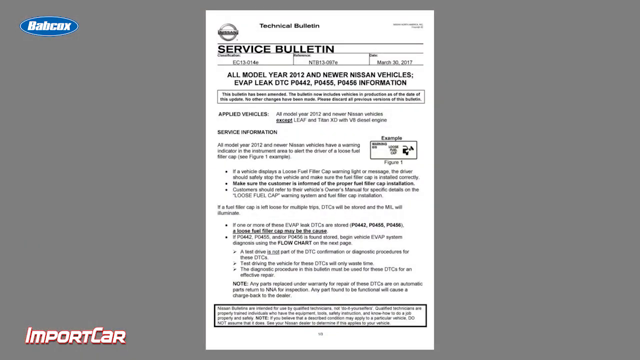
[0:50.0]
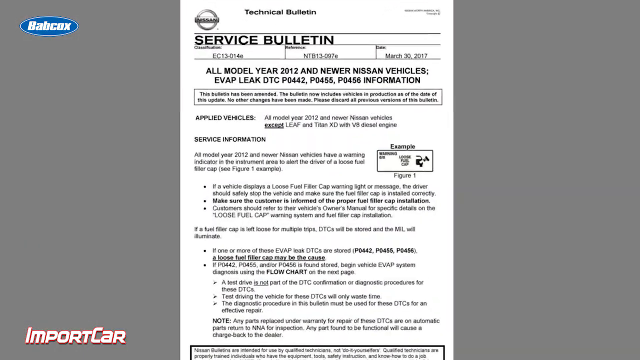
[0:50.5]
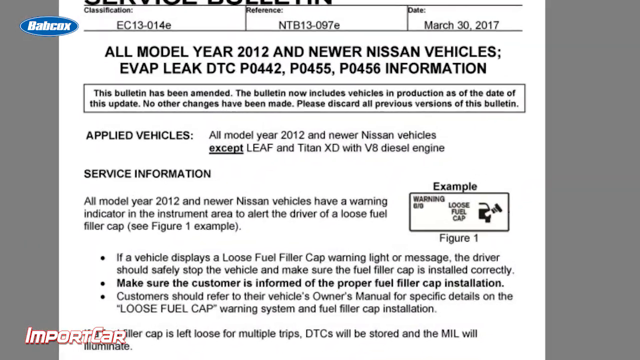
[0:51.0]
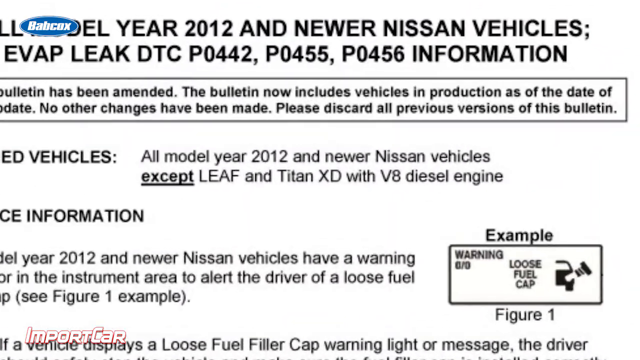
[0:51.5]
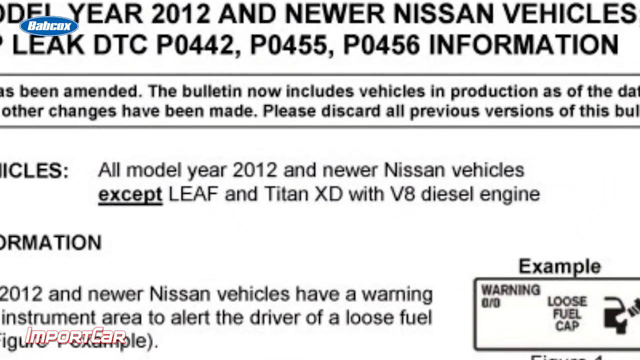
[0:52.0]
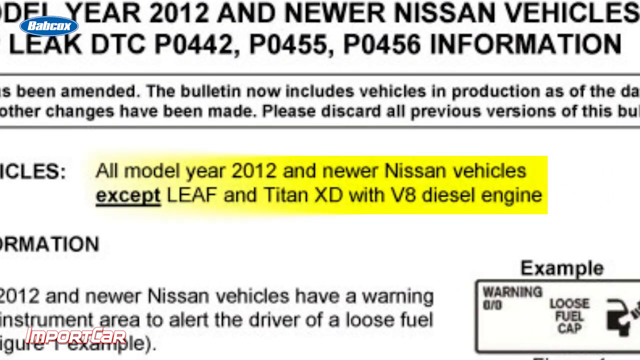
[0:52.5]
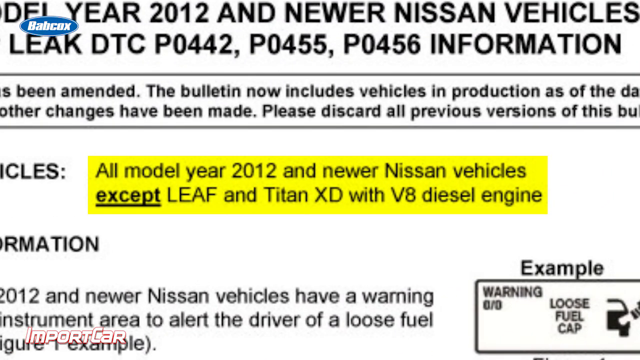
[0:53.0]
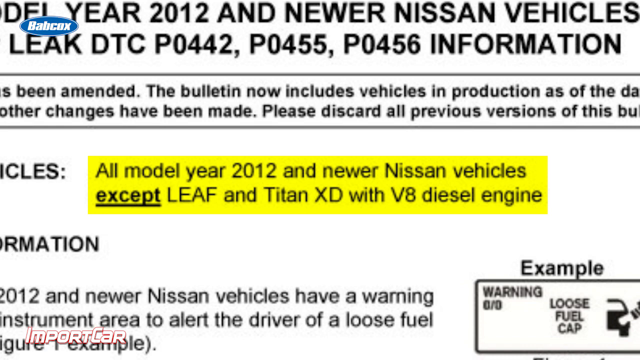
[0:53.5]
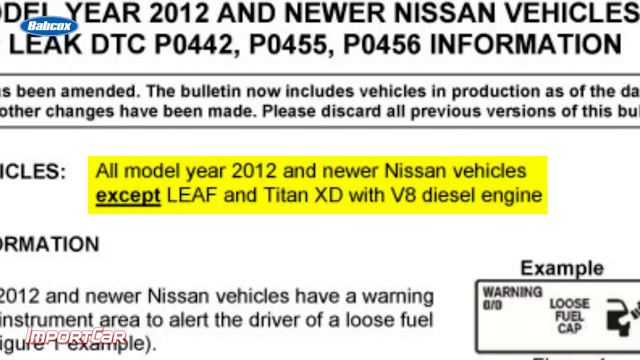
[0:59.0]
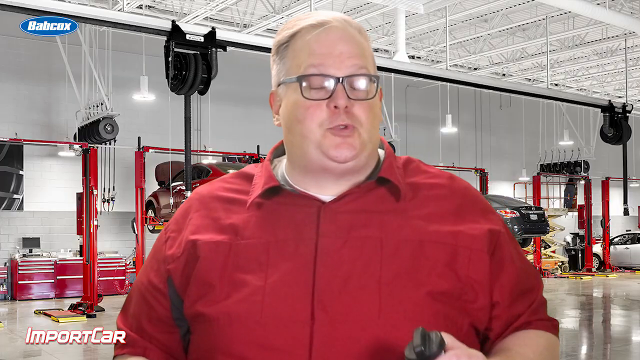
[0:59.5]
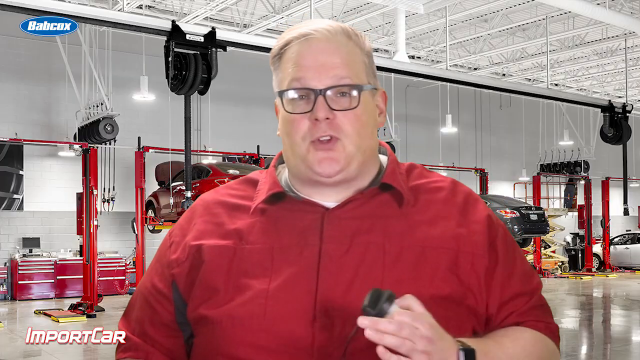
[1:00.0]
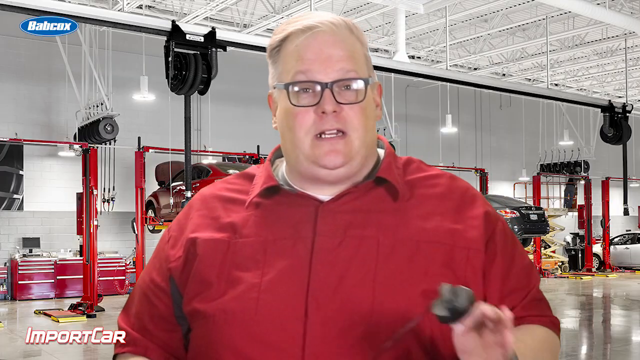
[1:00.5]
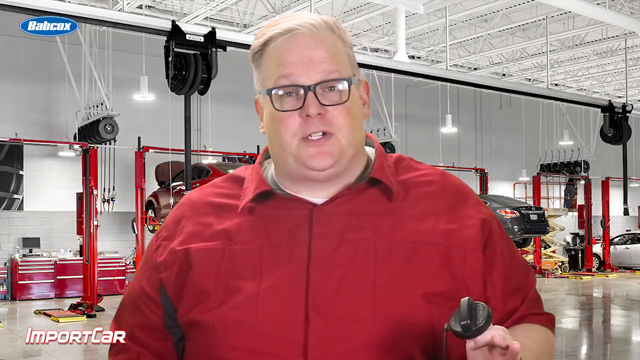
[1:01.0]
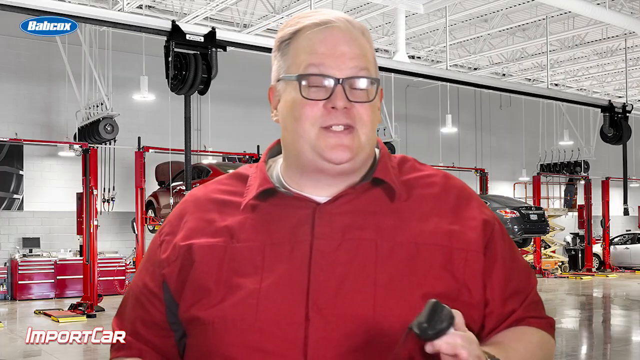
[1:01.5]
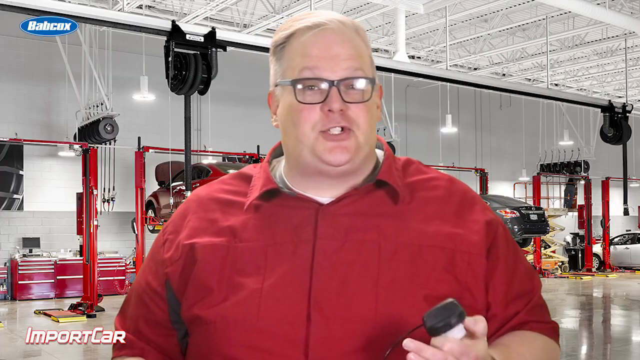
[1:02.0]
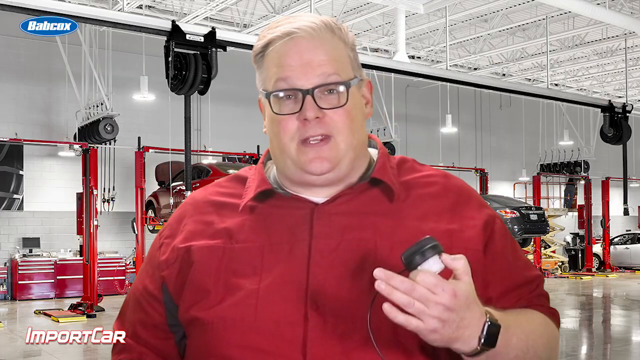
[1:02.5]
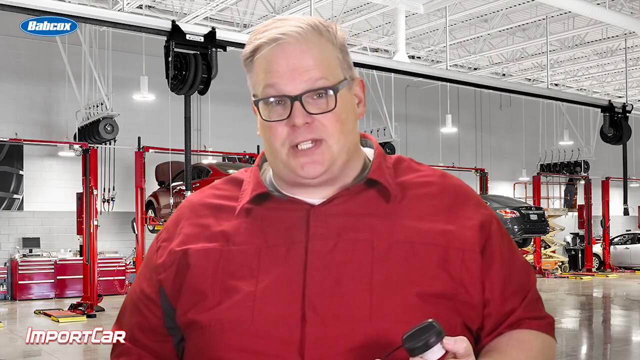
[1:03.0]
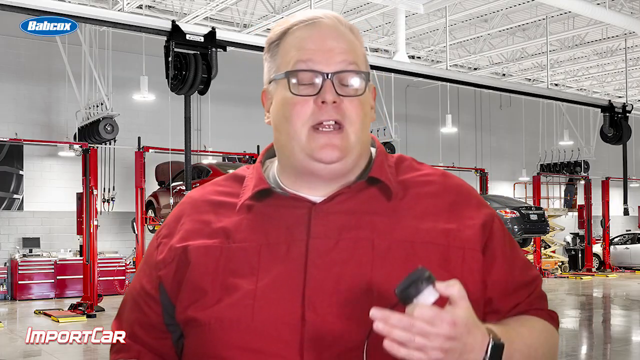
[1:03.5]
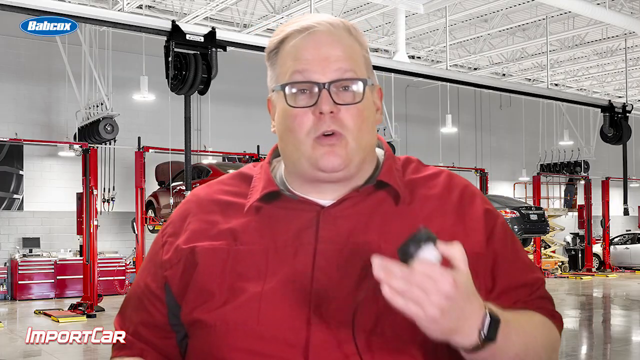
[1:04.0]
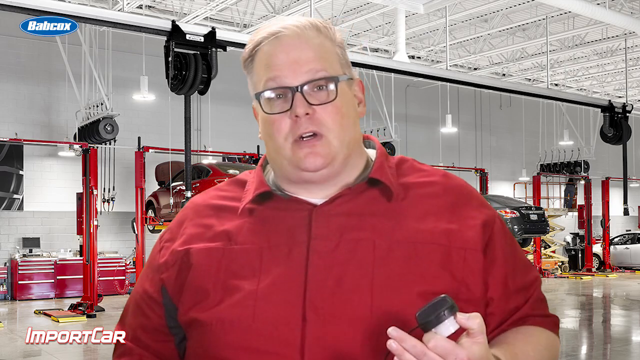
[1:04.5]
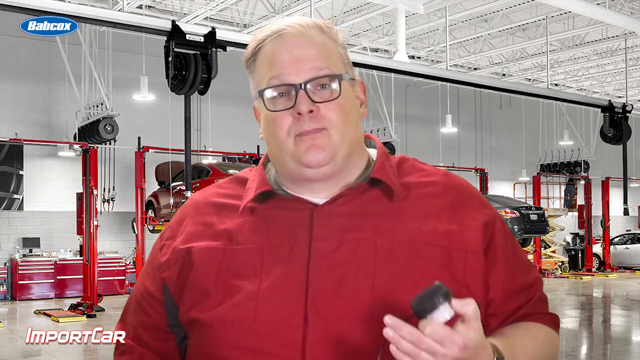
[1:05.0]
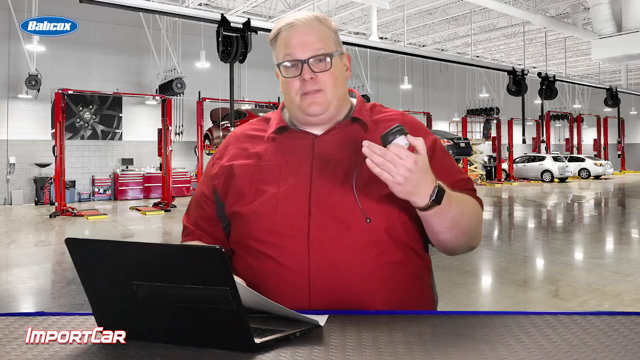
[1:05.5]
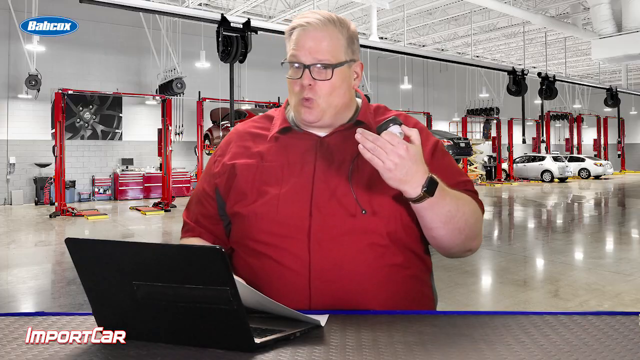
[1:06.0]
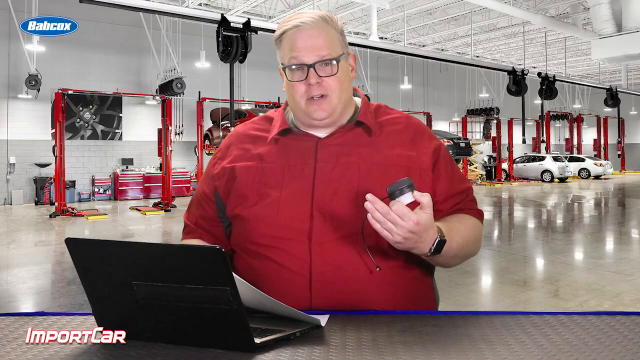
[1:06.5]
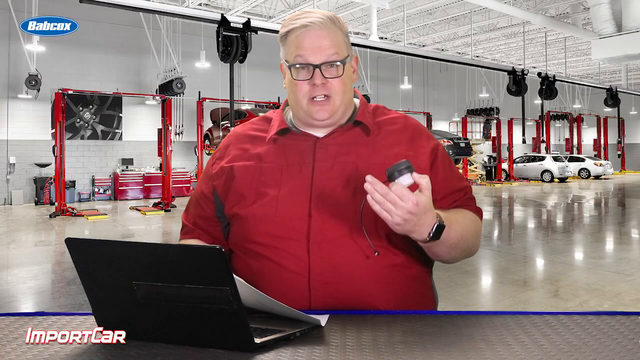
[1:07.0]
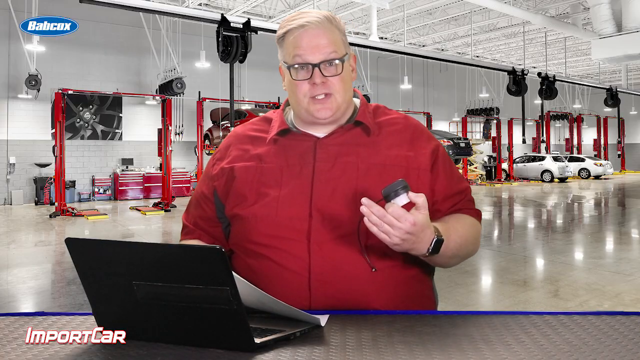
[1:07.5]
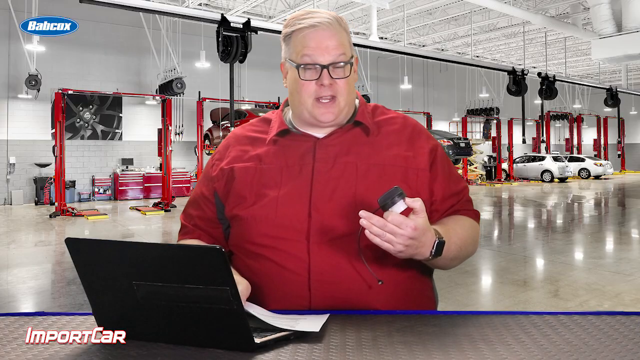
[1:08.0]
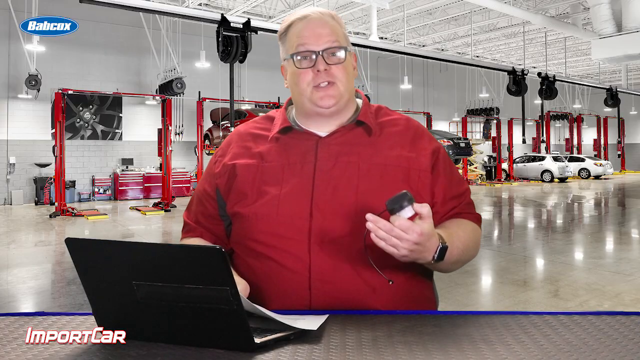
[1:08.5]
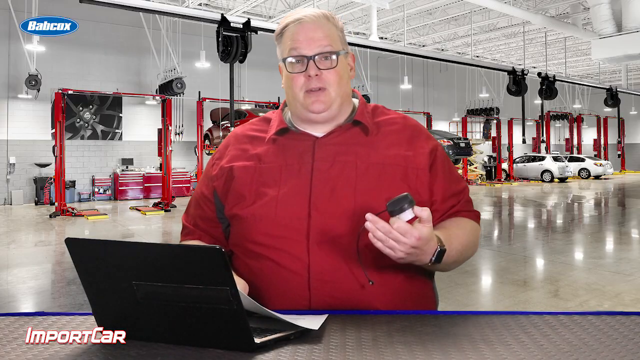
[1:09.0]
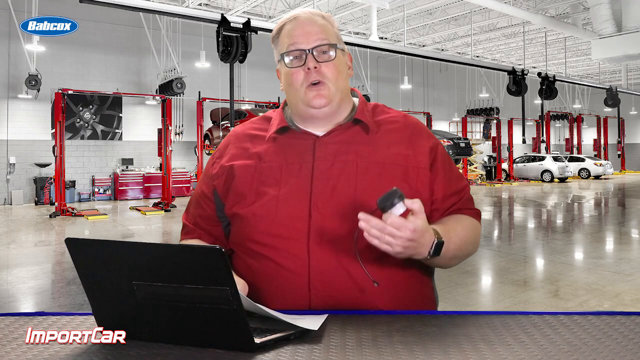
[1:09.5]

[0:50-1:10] A service bulletin appears with the headline "all model years and newer Nissan vehicles evap leak". The shot closes in on the words "all model years 2012 and newer except Leaf and XD with V8 diesel engines". The very large white man with blonde hair and glasses is then seen talking while holding a gas cap in his left hand.